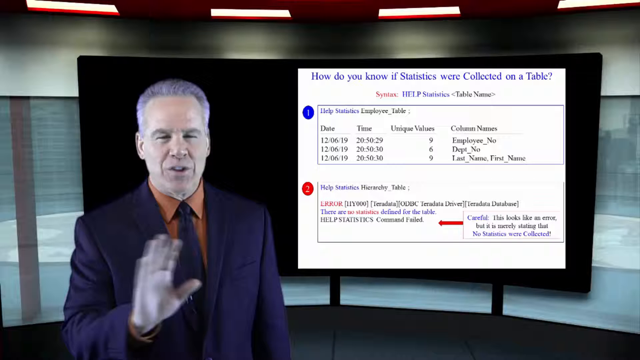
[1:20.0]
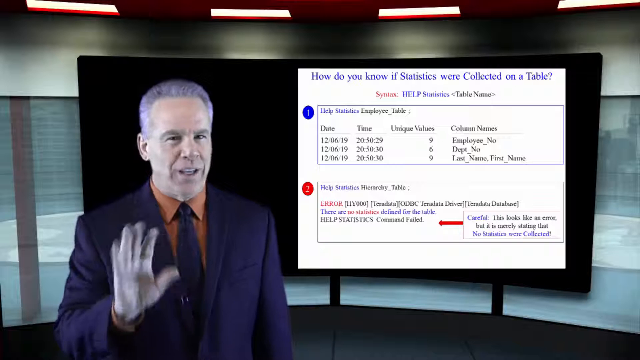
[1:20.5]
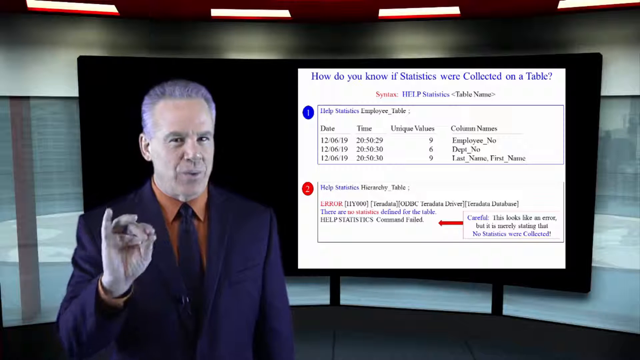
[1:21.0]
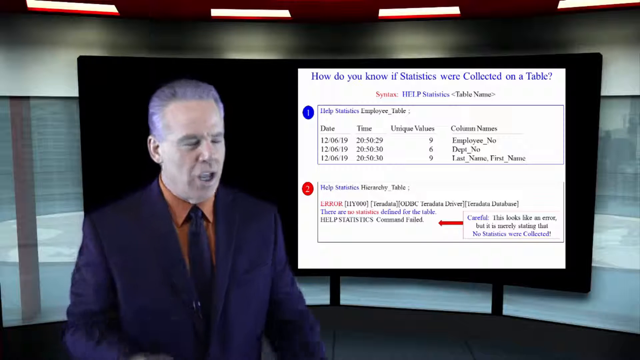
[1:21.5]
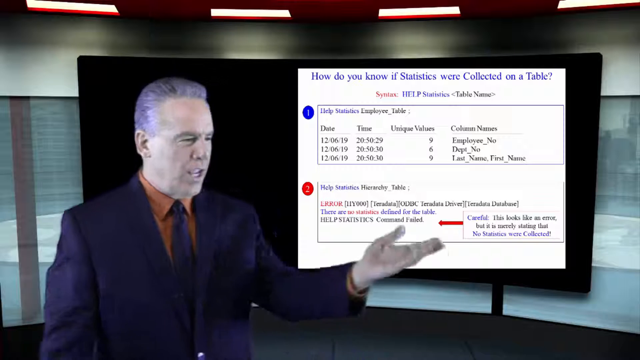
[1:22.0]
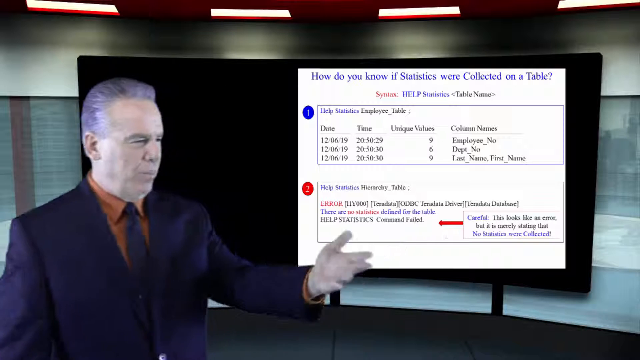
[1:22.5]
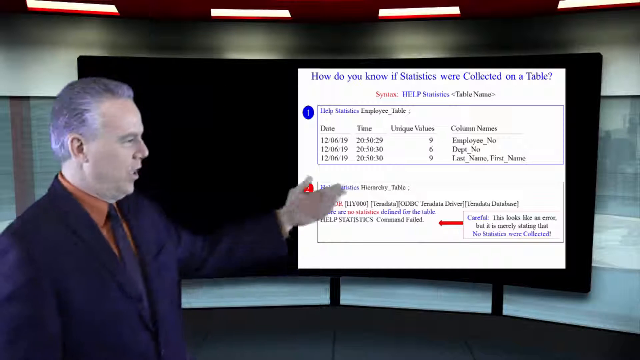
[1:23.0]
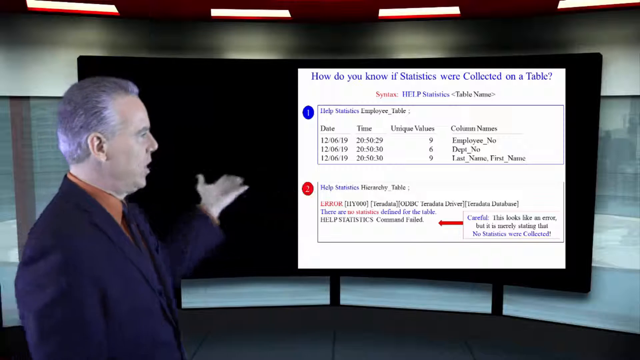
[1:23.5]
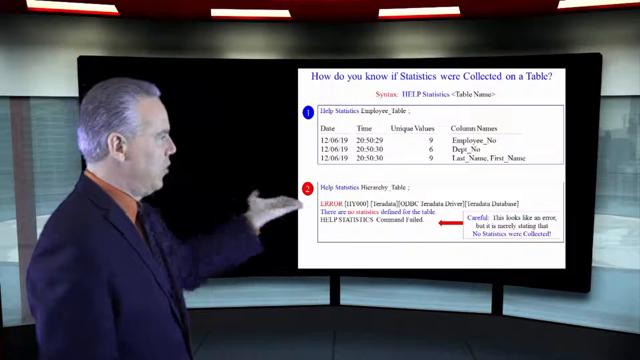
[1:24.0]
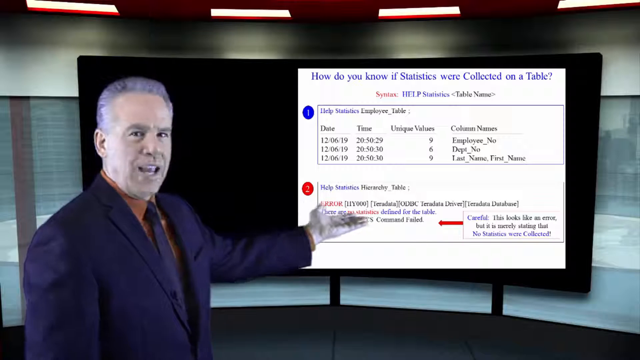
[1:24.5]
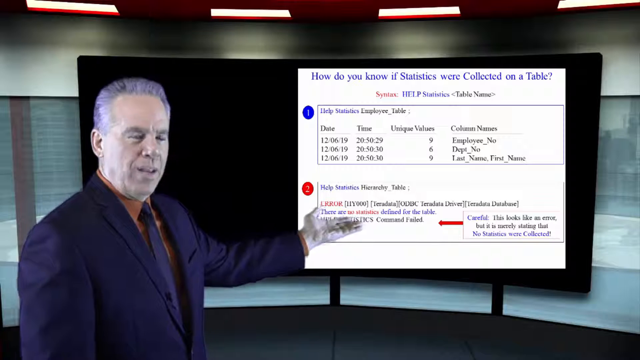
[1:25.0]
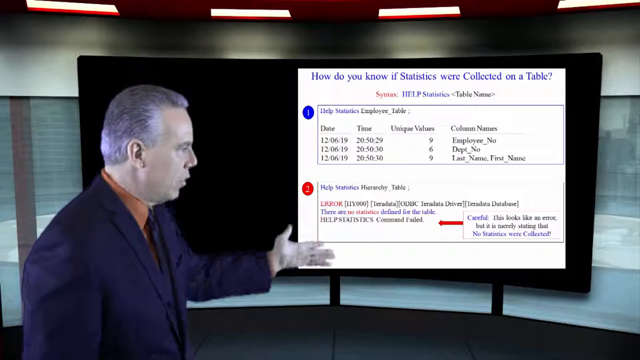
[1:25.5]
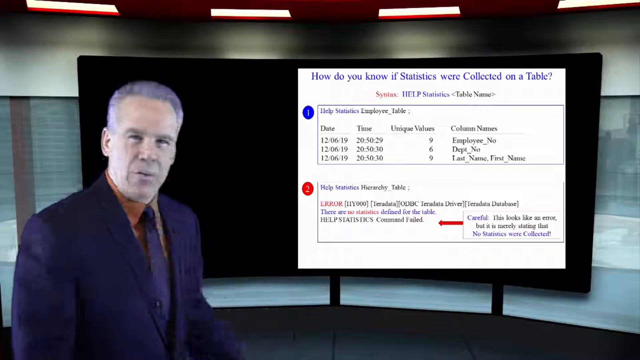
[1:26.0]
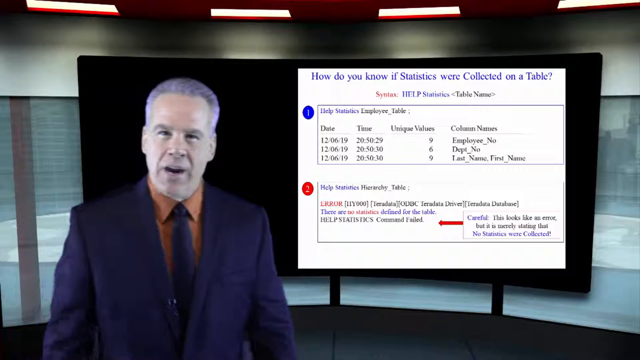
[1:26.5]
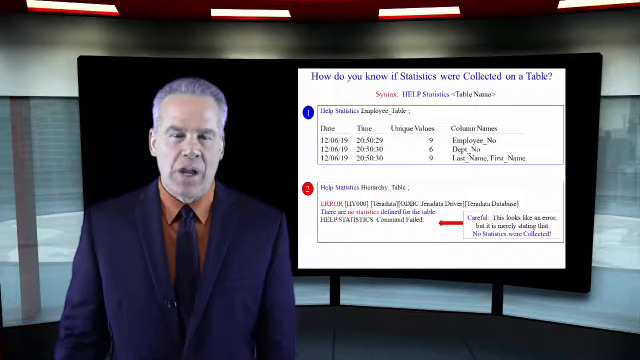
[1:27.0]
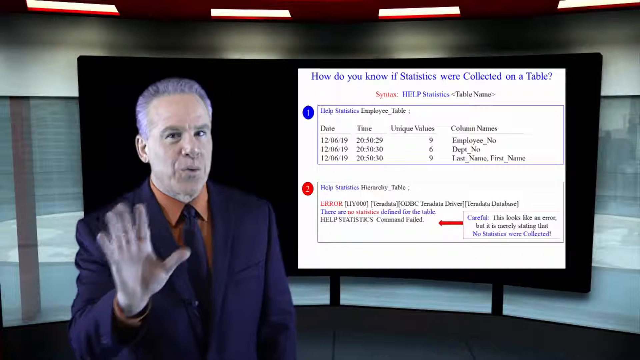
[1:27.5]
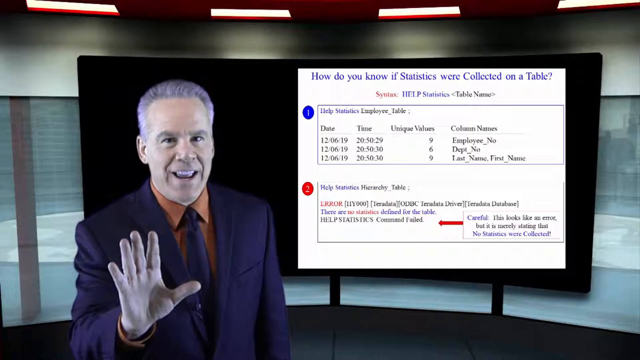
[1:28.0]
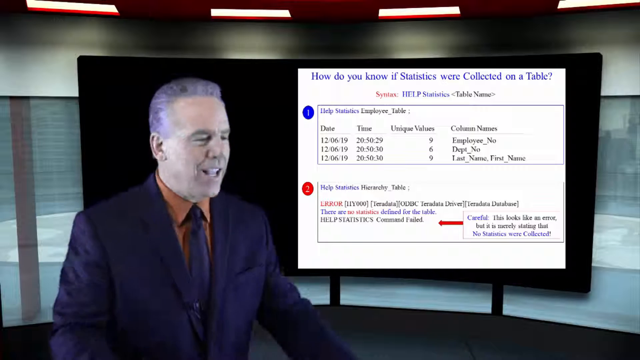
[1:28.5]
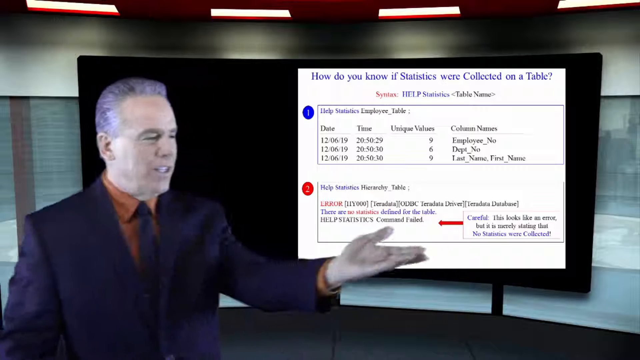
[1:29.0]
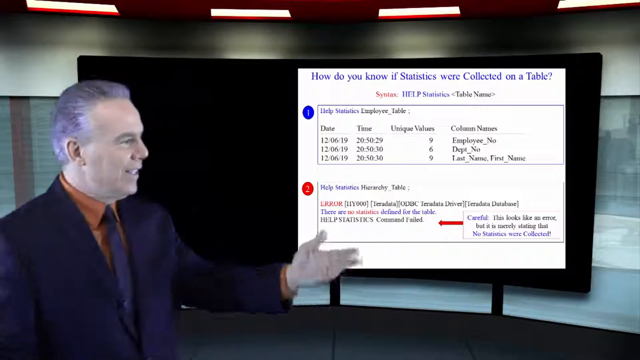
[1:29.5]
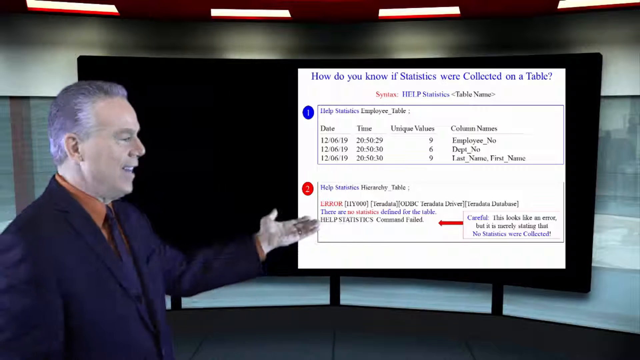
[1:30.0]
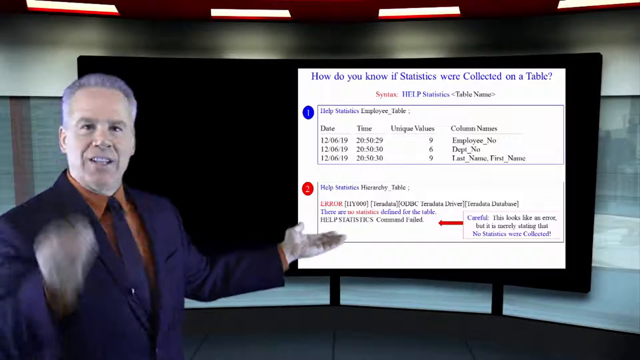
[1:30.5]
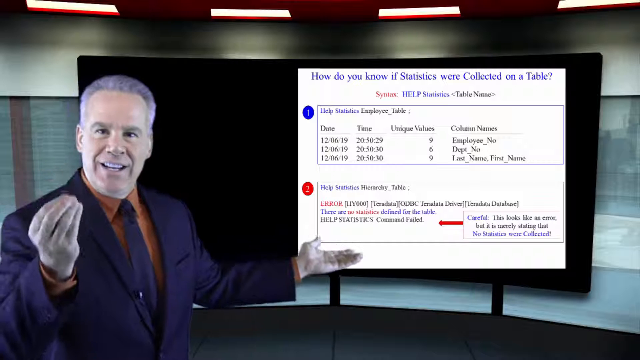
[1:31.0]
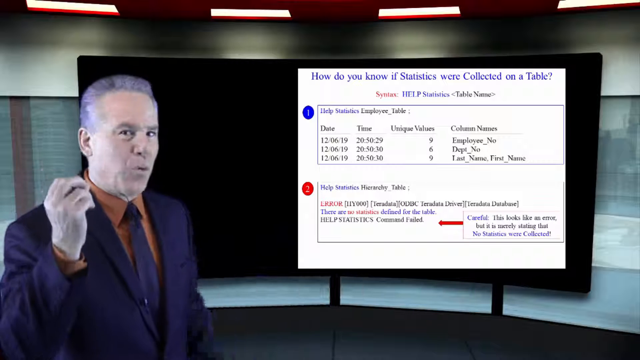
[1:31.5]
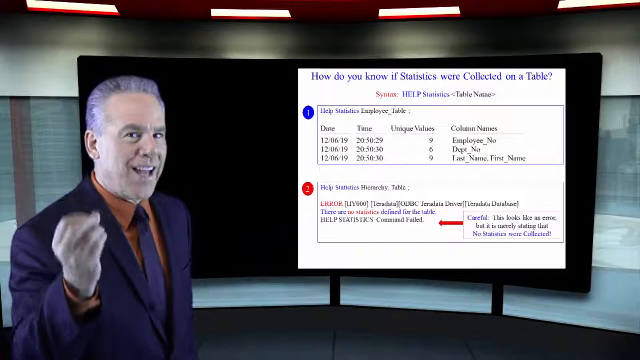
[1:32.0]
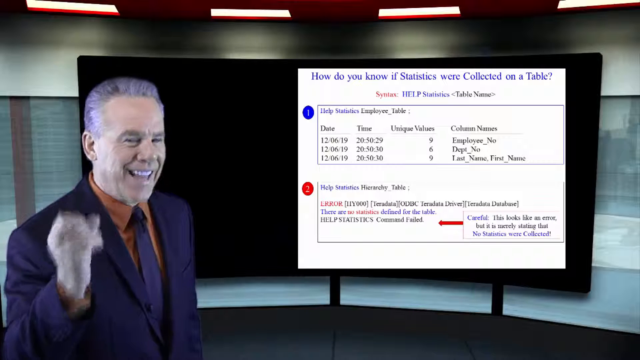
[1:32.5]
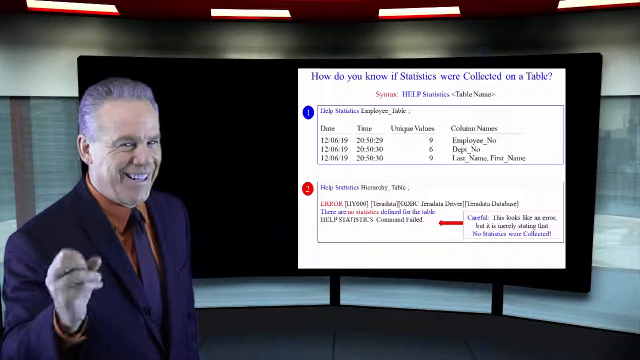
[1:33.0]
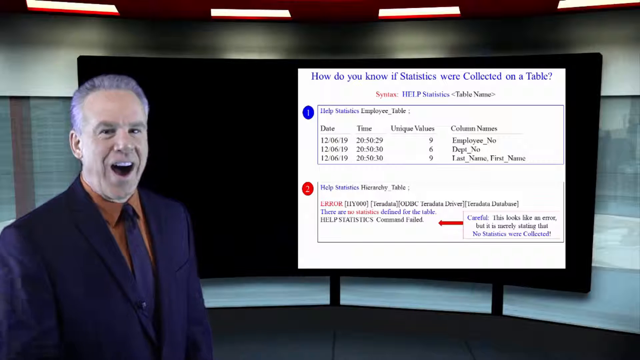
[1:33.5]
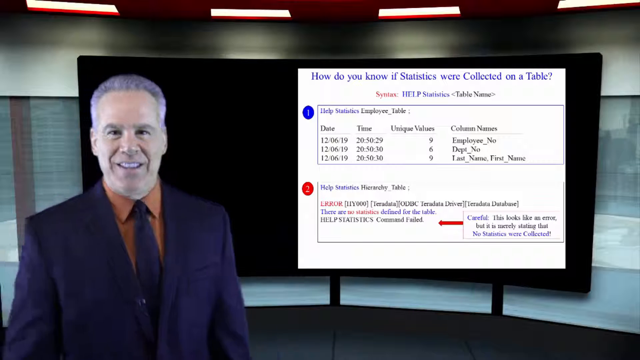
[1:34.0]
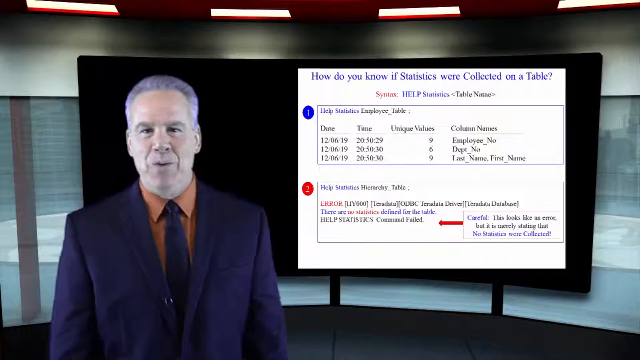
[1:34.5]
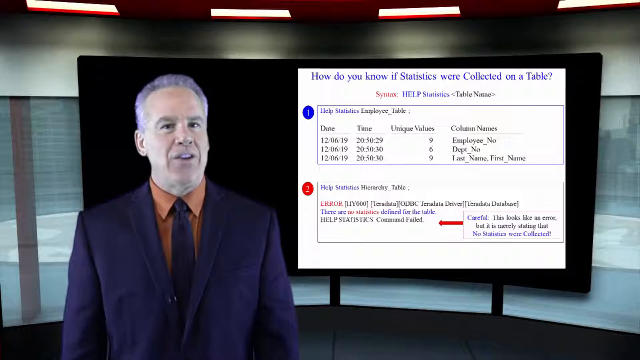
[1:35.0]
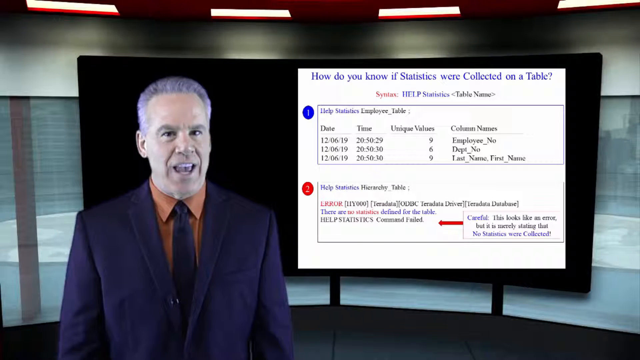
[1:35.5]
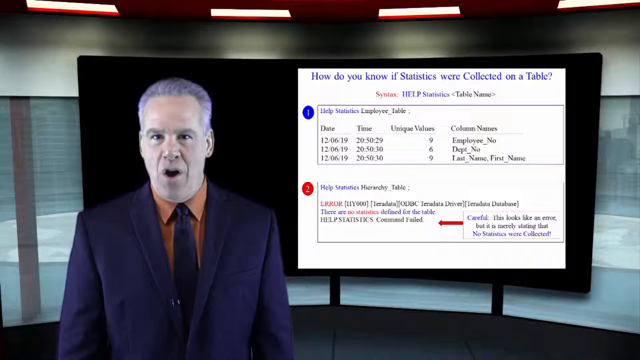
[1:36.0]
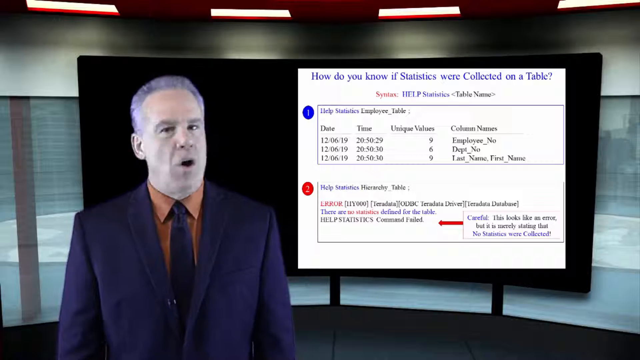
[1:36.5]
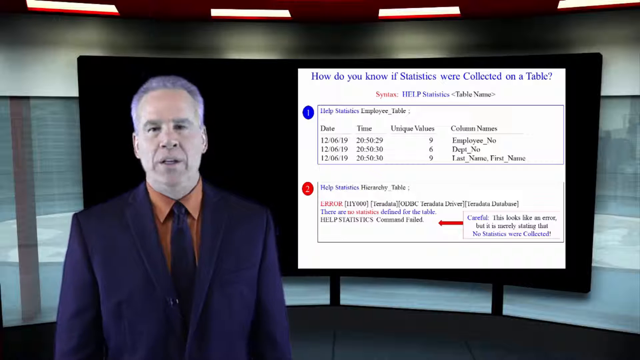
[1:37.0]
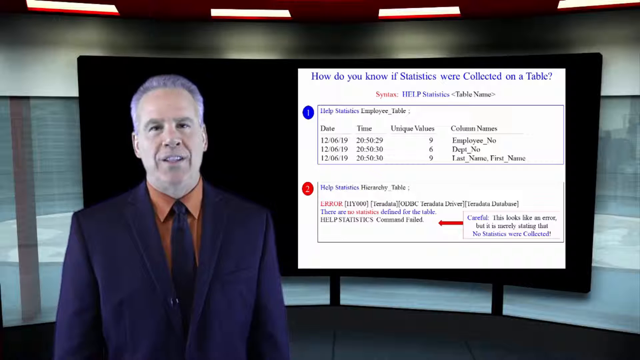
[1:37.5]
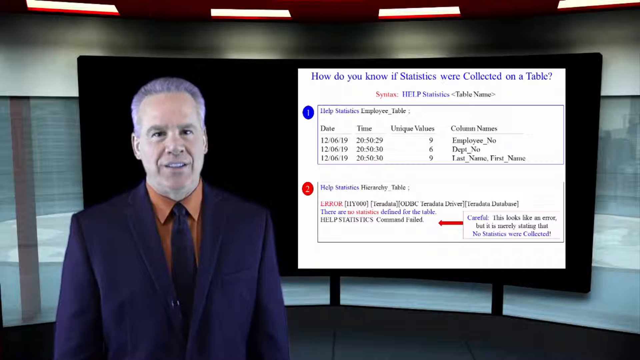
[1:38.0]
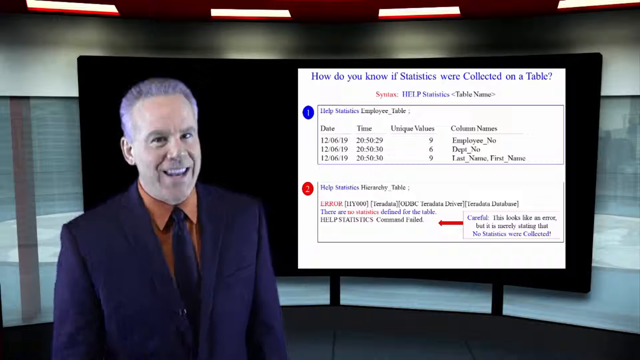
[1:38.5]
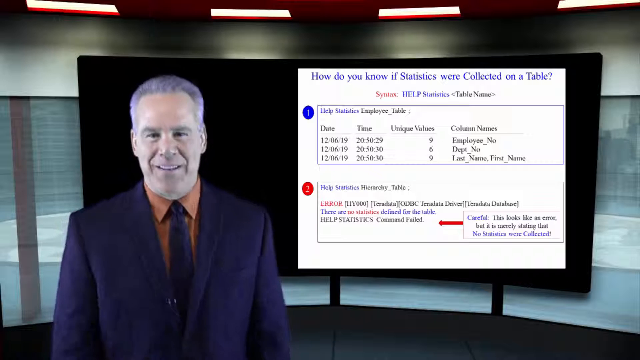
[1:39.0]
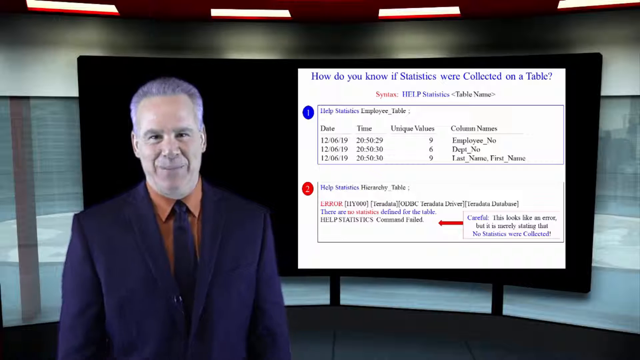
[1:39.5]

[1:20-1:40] A man faces the viewer, talking in an animated, enthusiastic way about the contents of a screen in the background above his left shoulder. The screen shows a slide with a white background titled "How Do You Know If Statistics Were Collected on a Table?" The slide has two parts: the top one appears to be a table with columns labeled "Date," "Time," "Unique Values" and "Column Names," and the second half is labeled with a 2 in a red circle and titled "Help Statistics Hierarchy Table." The rest of the text is too small to read. The man, in a dark suit and tie and a brown shirt, appears to be giving a lively lecture, gesturing a lot and drawing attention to the chart with his hands. The video is perhaps in the style of an online class or course.